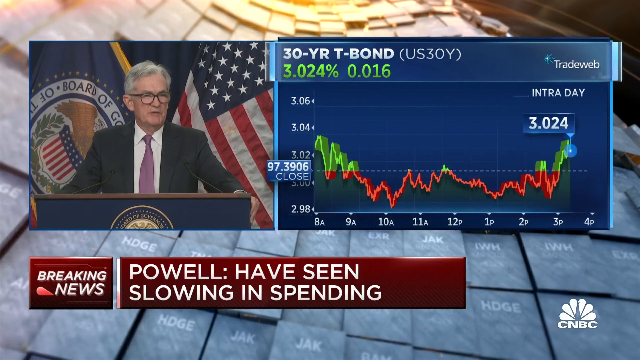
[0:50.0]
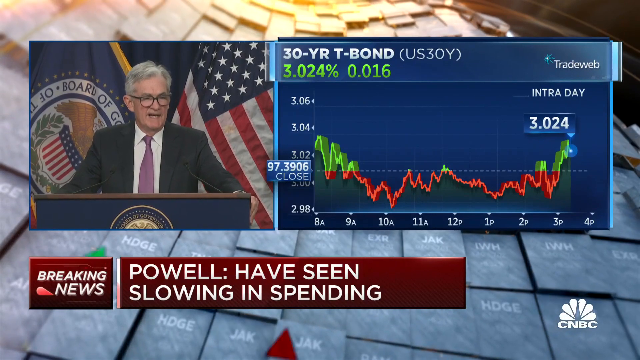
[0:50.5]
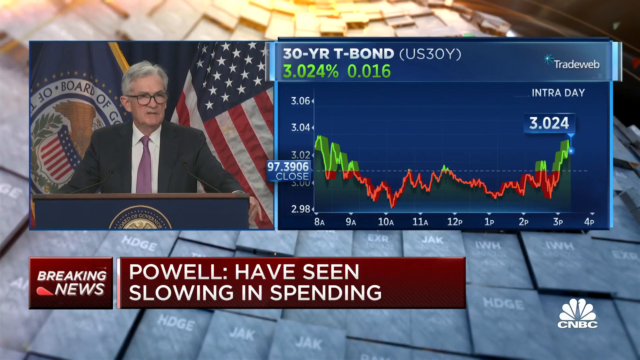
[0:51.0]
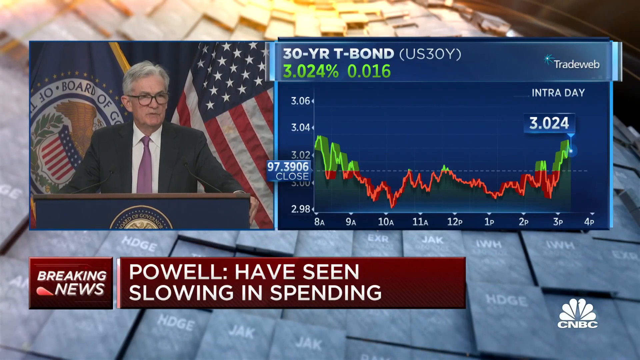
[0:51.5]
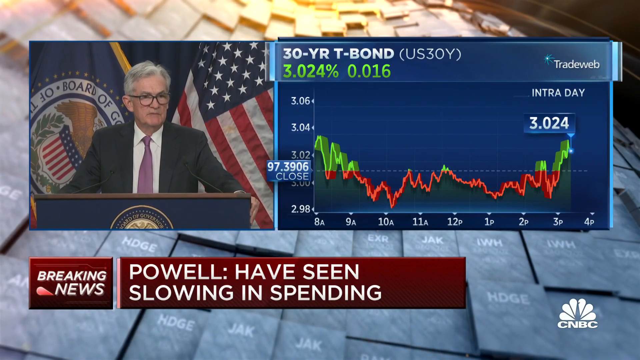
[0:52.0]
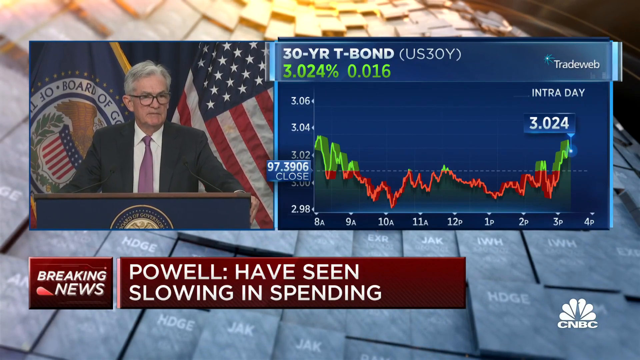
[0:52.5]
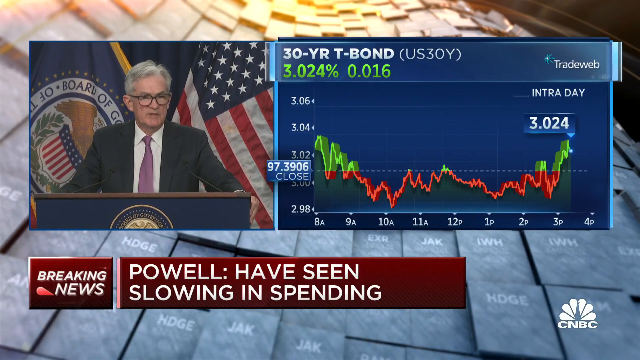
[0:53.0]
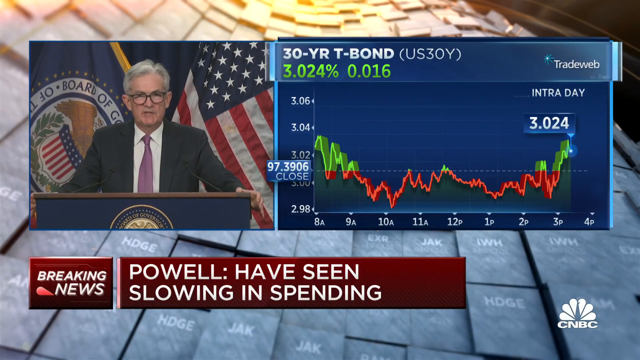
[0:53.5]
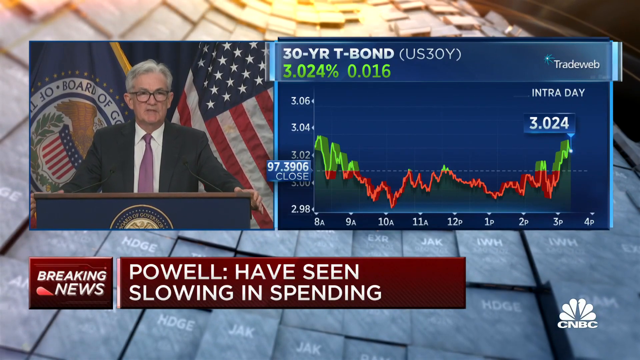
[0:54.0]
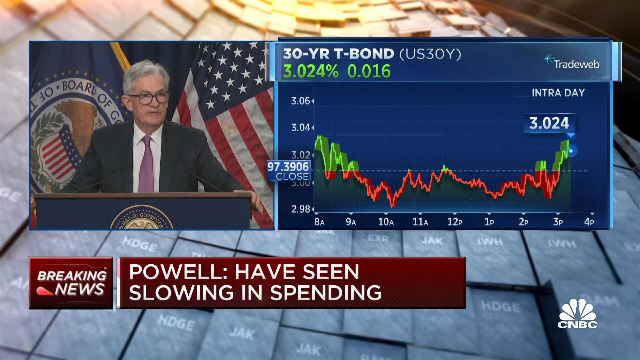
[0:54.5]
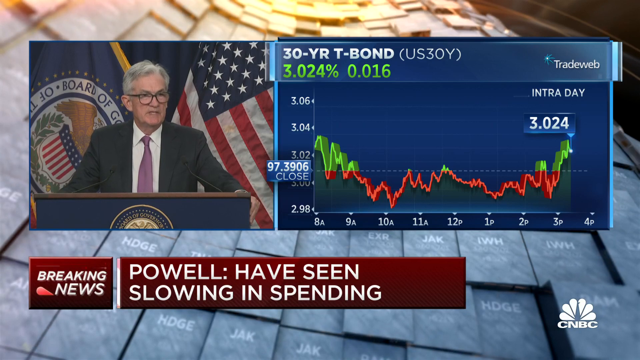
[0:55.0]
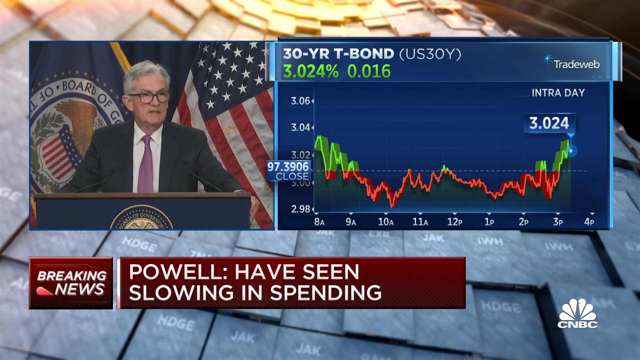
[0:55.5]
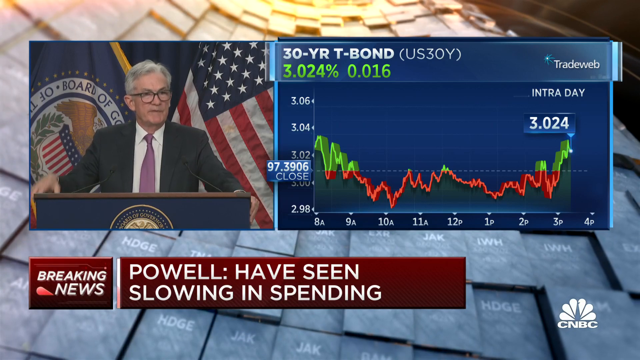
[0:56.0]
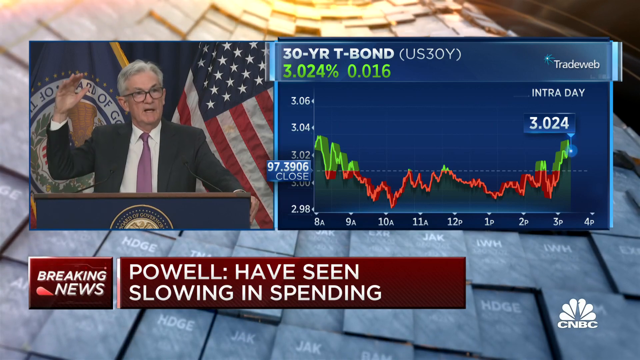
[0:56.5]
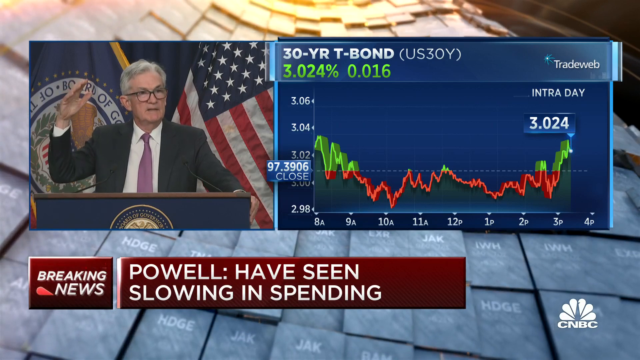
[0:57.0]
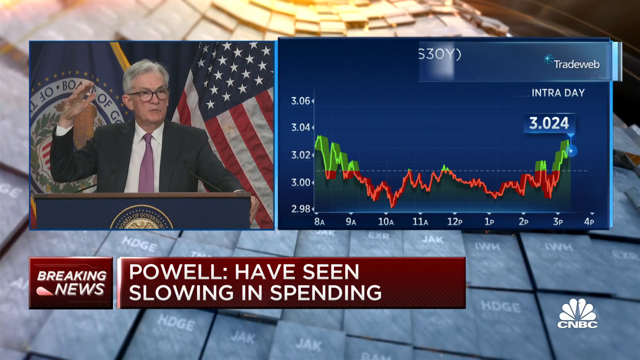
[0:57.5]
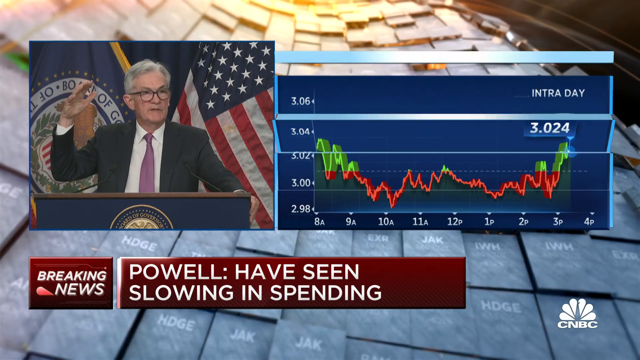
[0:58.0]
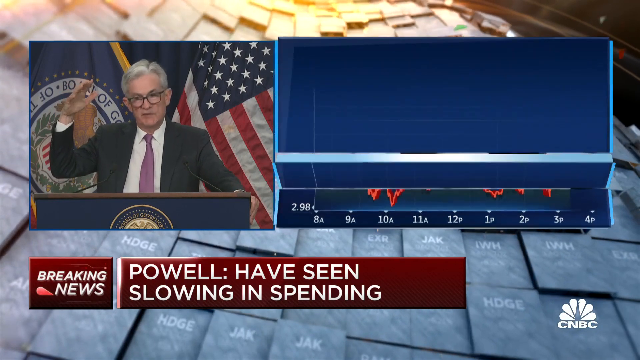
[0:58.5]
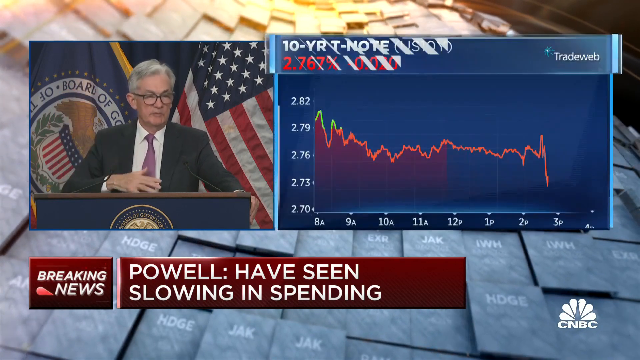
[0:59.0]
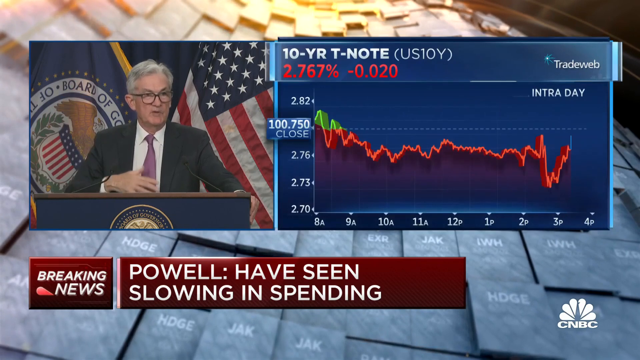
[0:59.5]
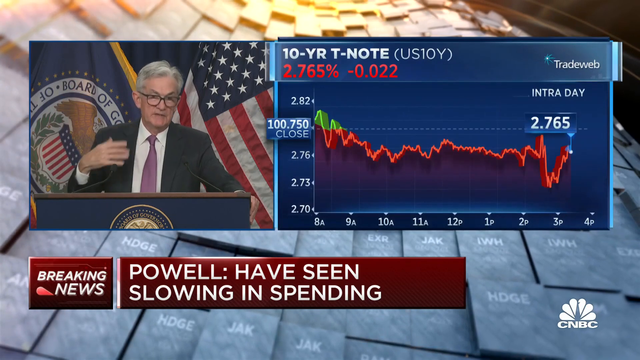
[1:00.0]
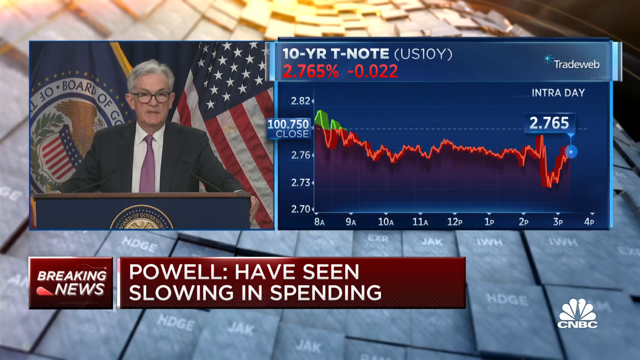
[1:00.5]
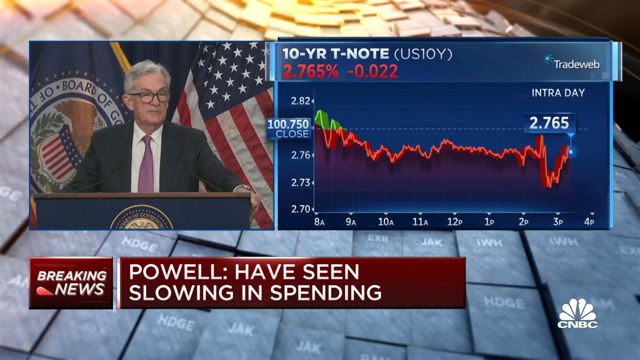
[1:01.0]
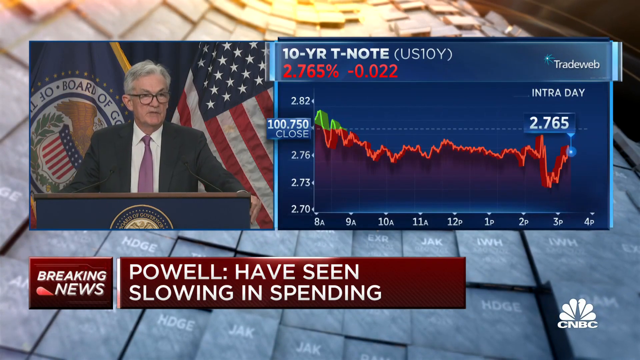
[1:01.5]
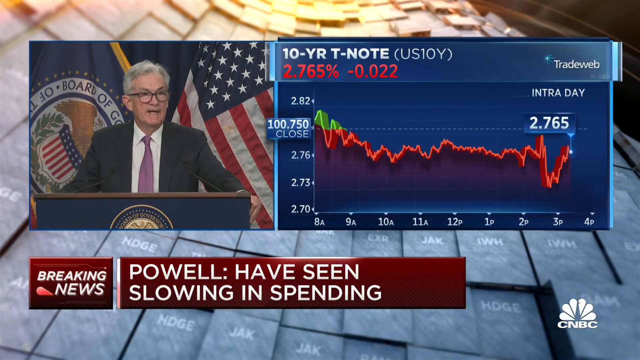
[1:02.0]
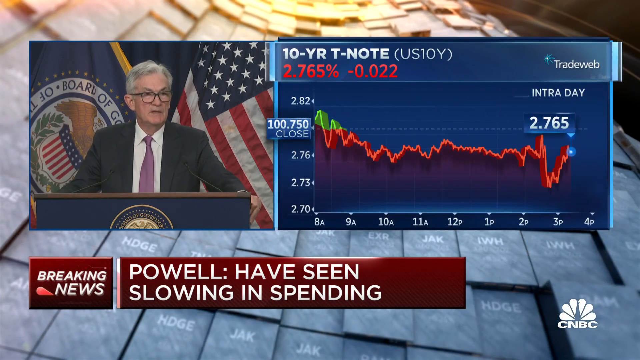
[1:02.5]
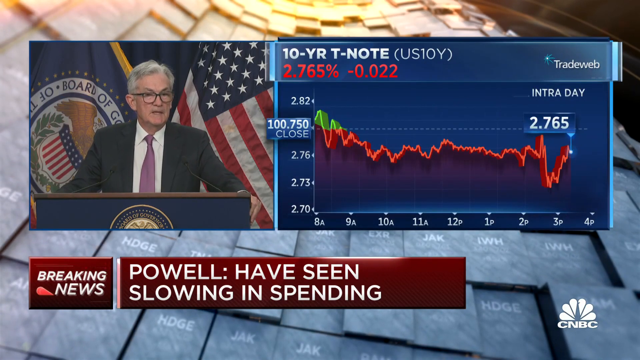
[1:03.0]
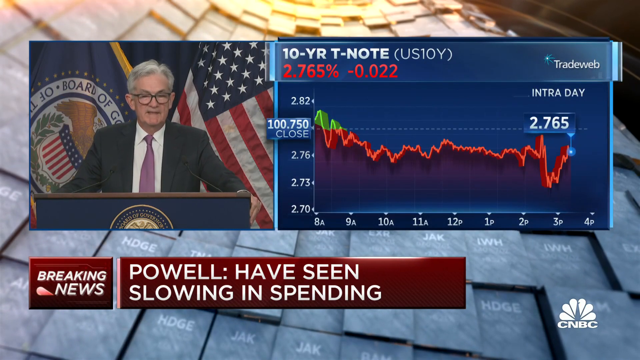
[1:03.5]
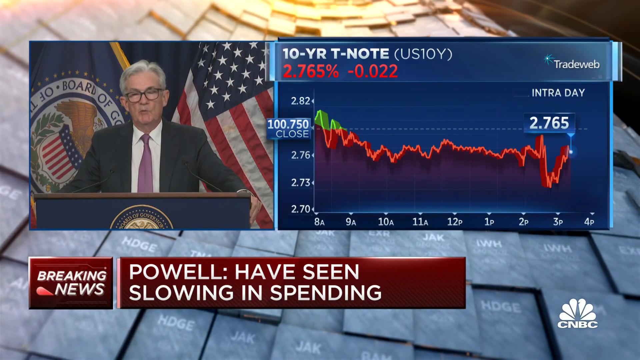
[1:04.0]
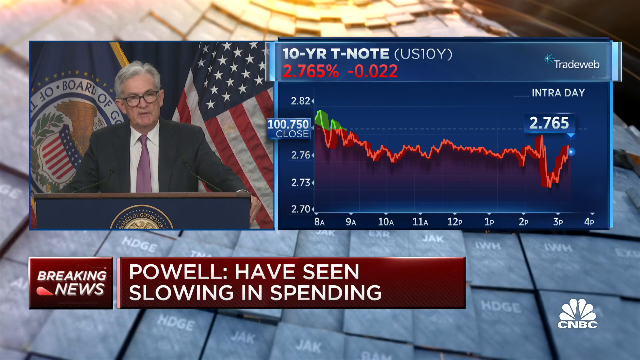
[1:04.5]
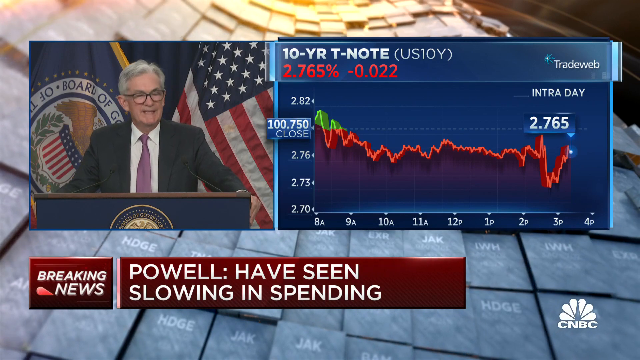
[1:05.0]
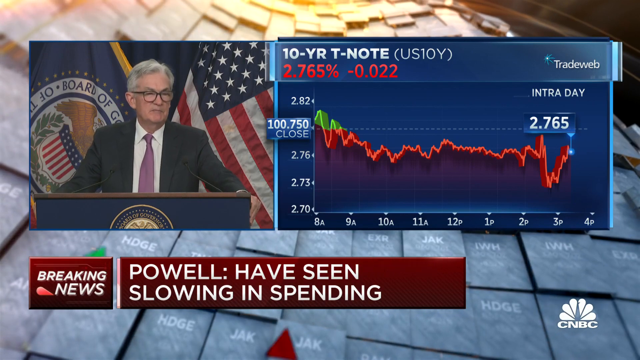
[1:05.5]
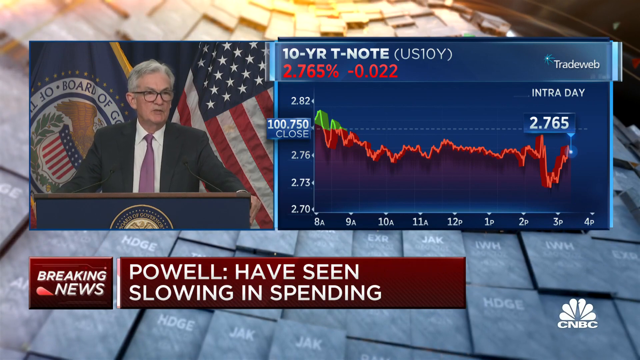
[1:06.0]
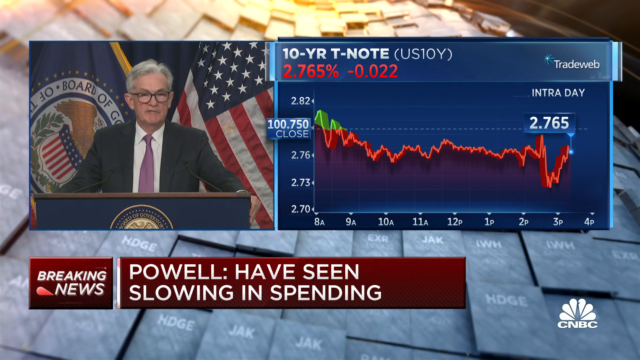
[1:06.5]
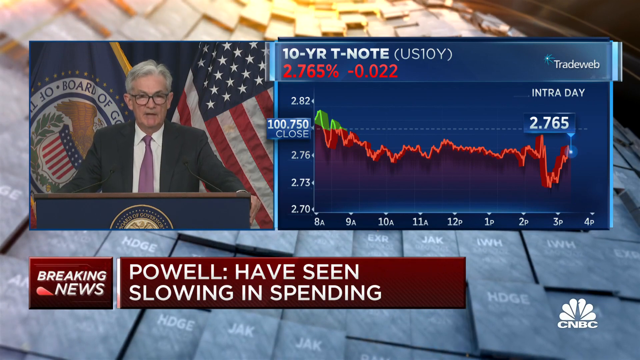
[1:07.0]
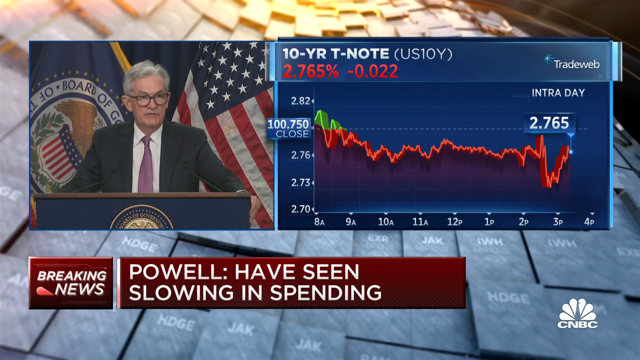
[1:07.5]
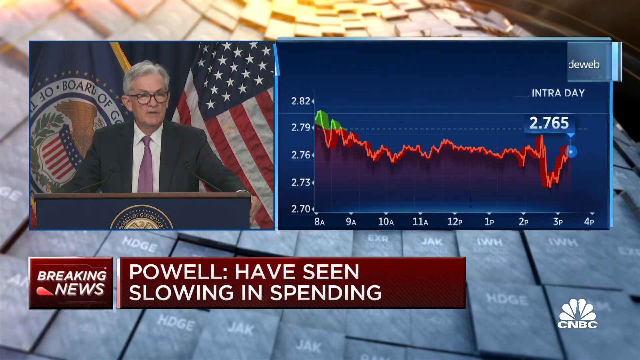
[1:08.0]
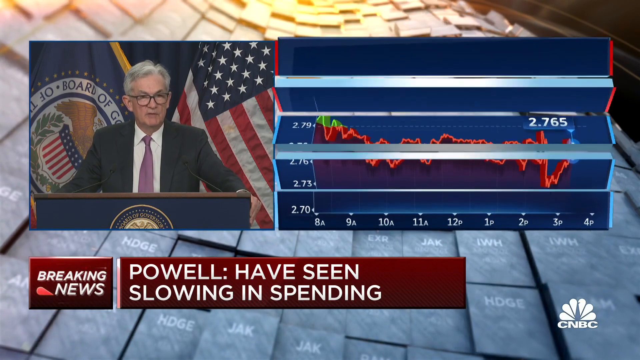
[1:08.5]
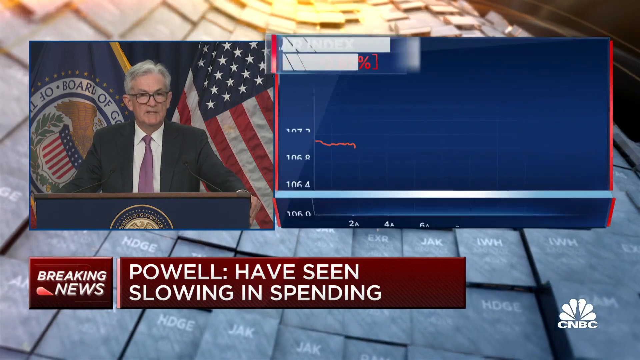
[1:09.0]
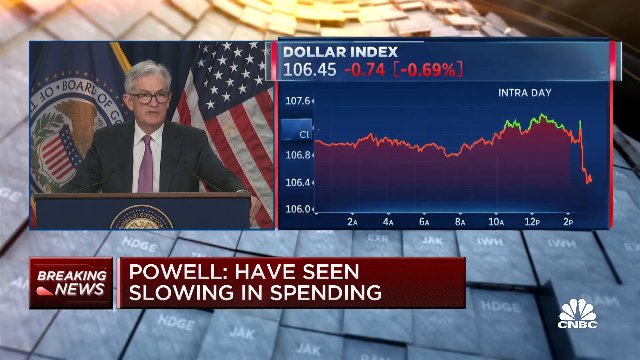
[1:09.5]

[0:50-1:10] Powell says that there has been a slowing in spending. The 30-year bond is shown, followed by the 10-year treasury note. Its graph starts the day high and then drops sharply into negative territory, with a small portion of green where it was positive for a short time. The segment is labeled CNBC breaking news.